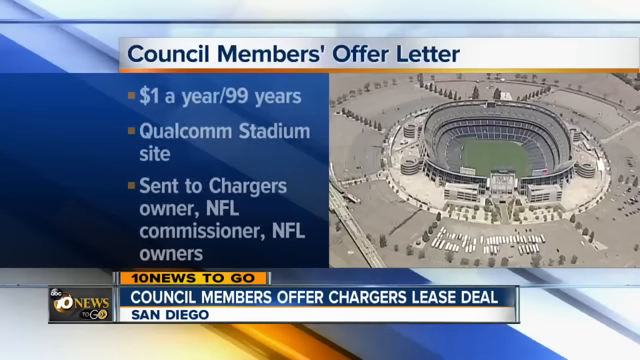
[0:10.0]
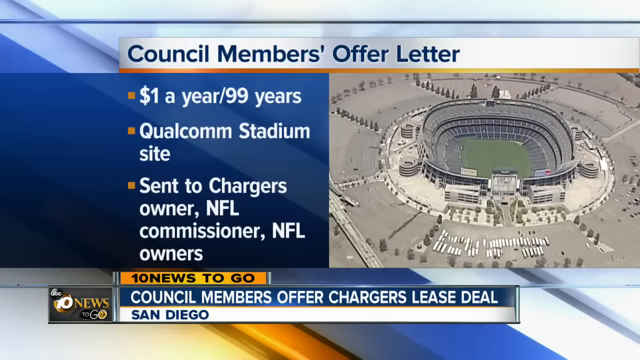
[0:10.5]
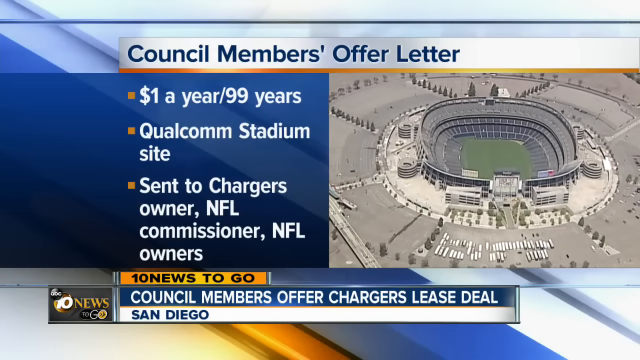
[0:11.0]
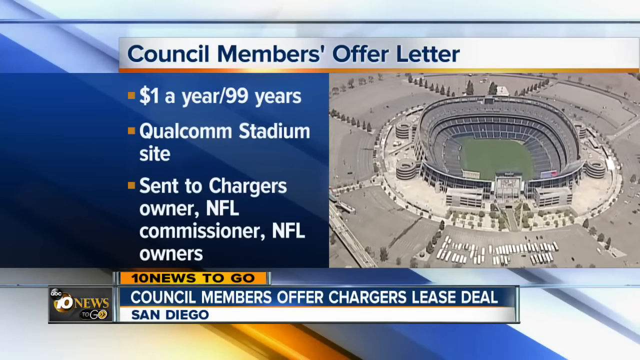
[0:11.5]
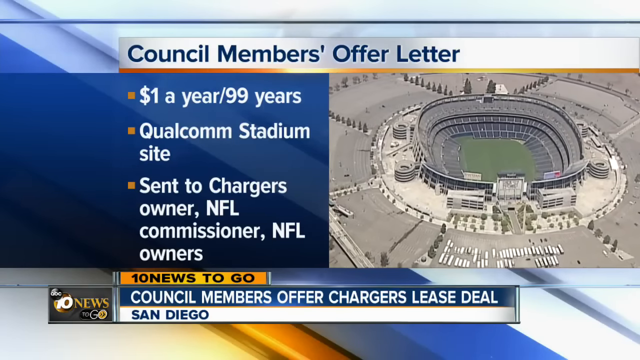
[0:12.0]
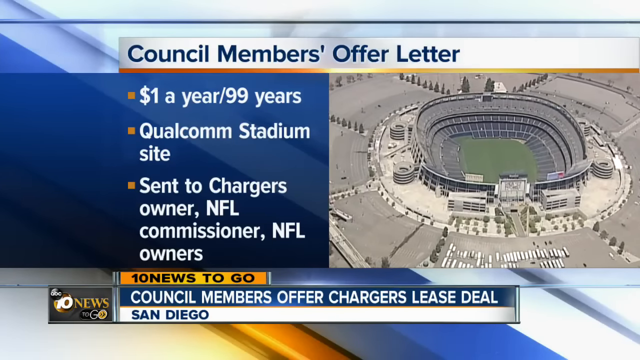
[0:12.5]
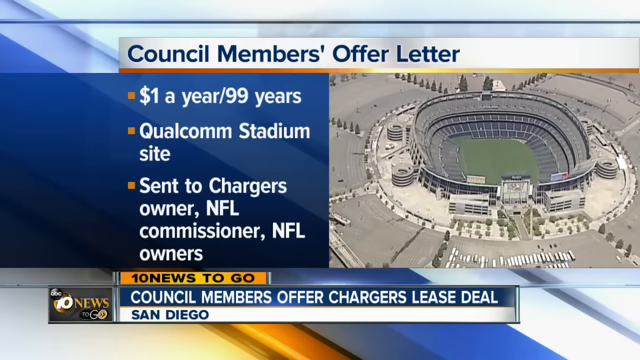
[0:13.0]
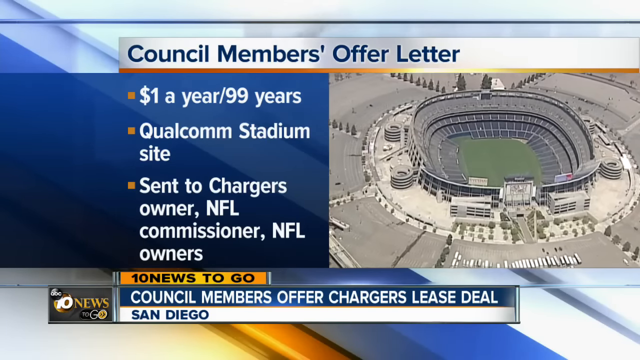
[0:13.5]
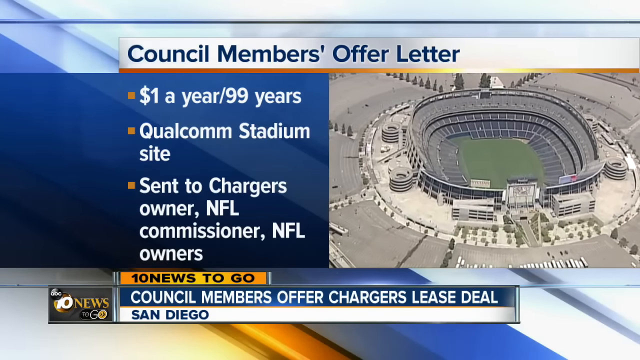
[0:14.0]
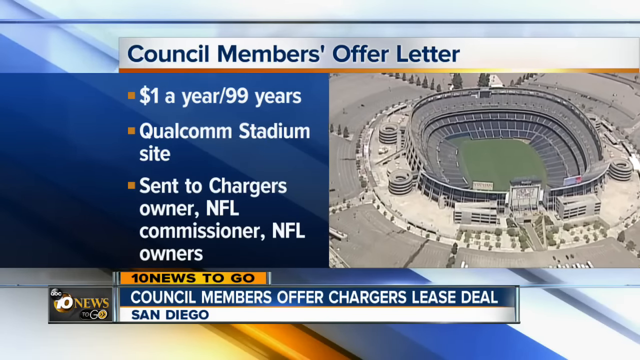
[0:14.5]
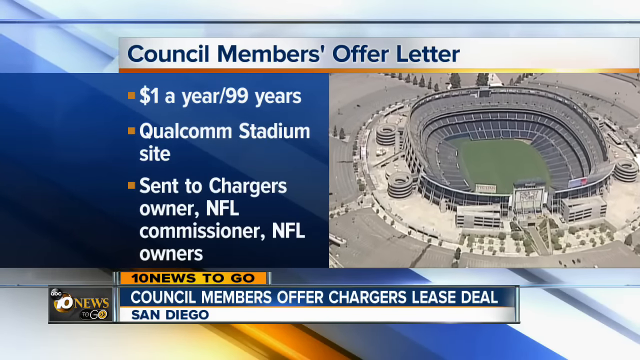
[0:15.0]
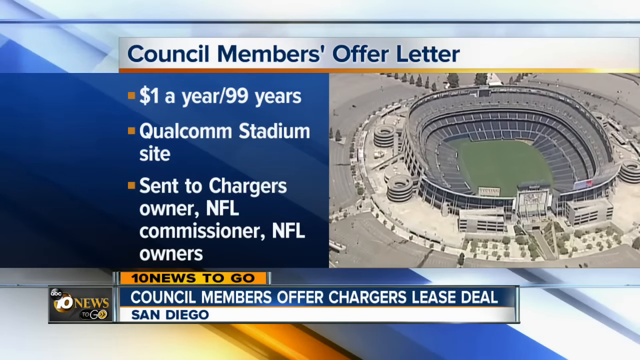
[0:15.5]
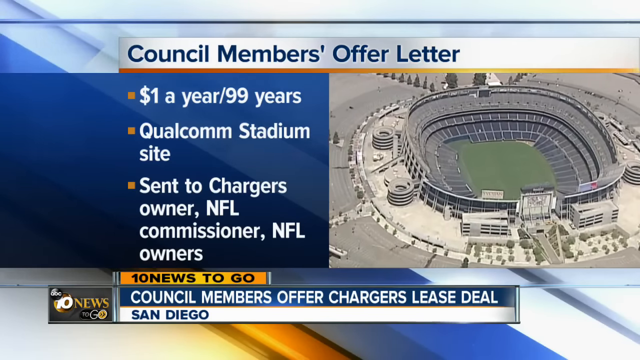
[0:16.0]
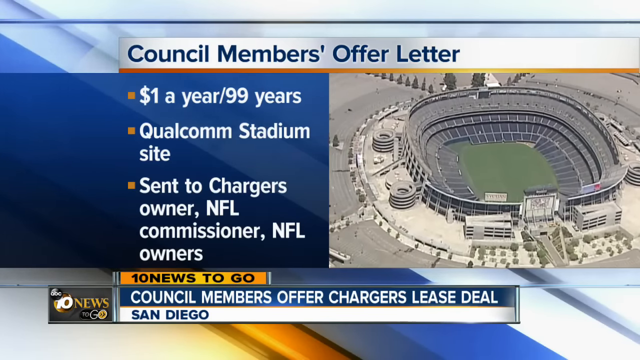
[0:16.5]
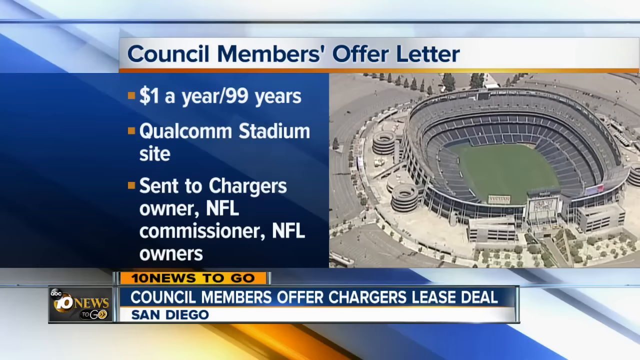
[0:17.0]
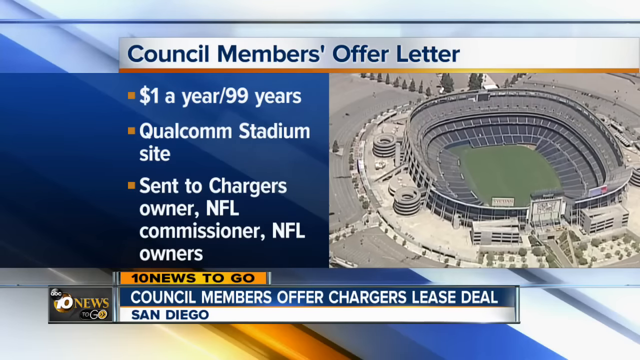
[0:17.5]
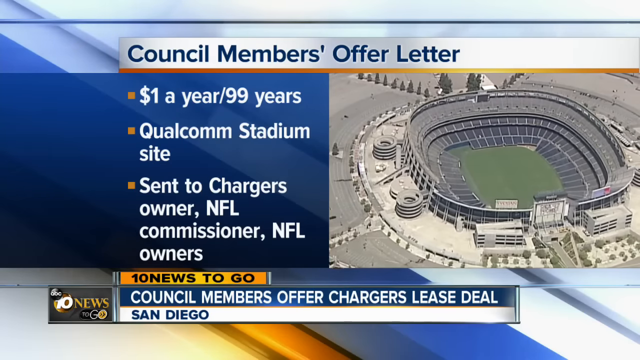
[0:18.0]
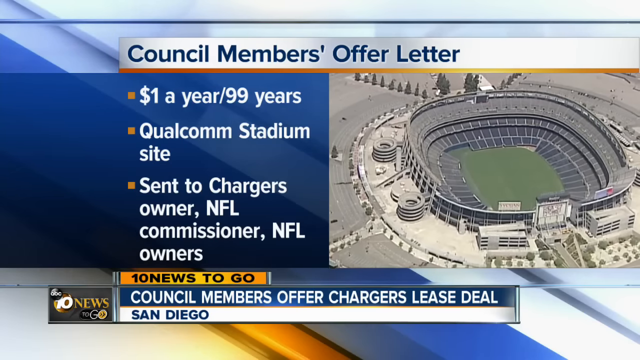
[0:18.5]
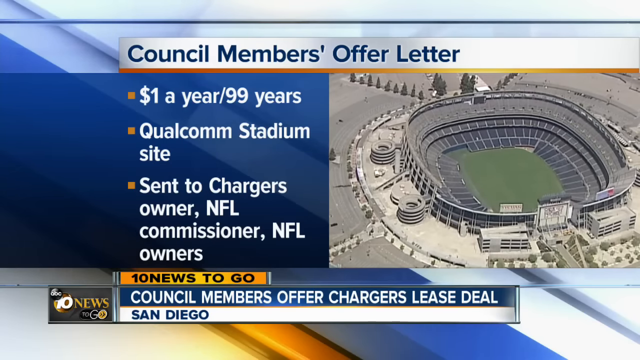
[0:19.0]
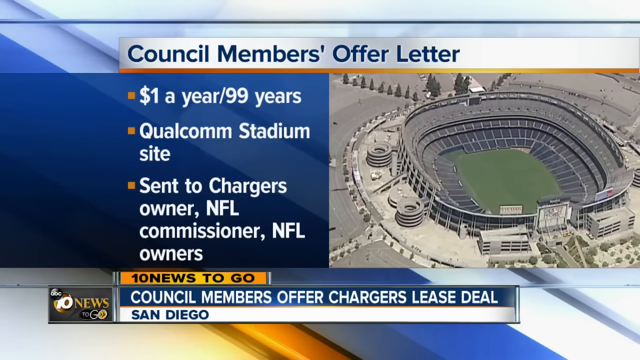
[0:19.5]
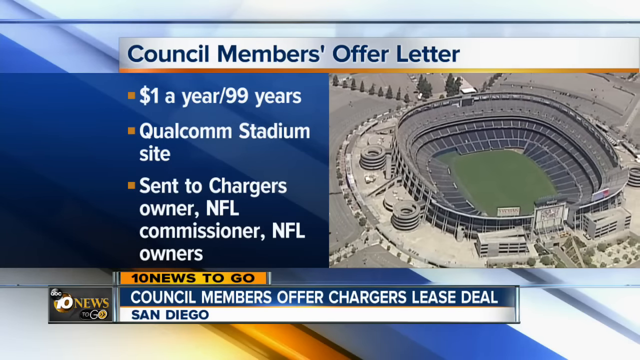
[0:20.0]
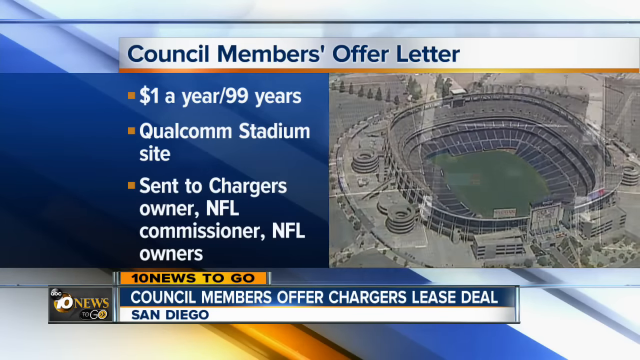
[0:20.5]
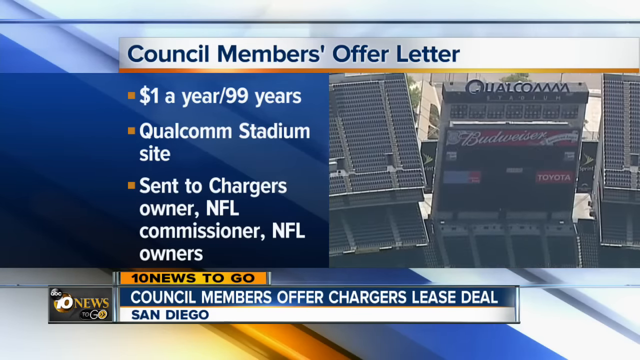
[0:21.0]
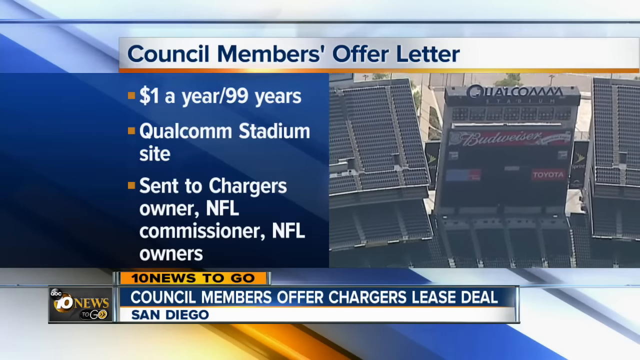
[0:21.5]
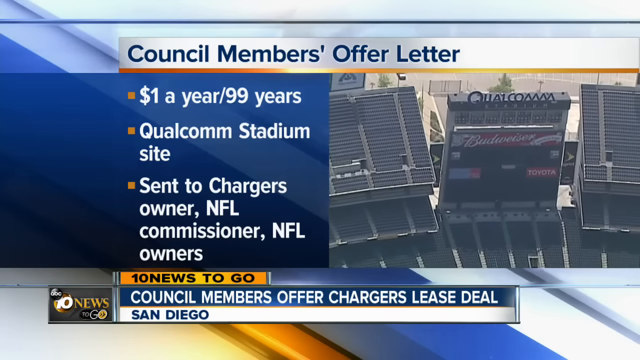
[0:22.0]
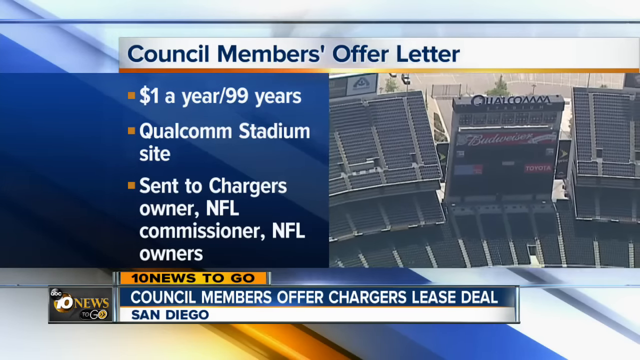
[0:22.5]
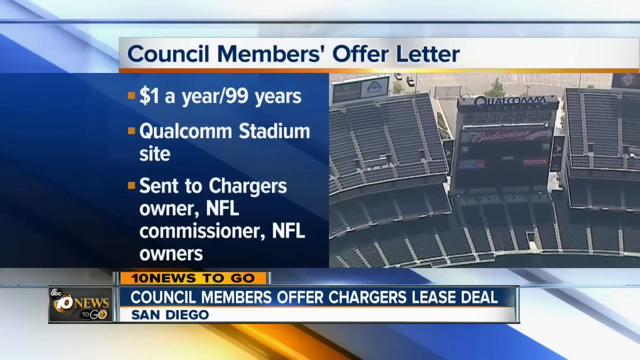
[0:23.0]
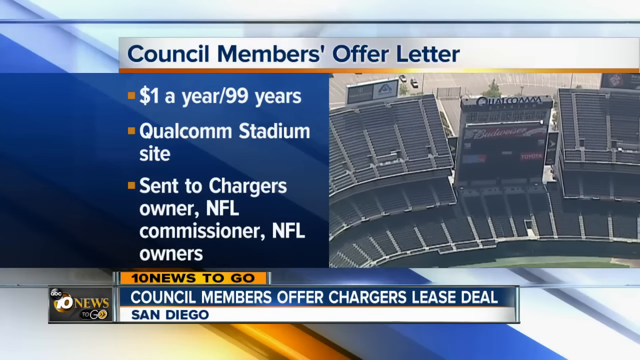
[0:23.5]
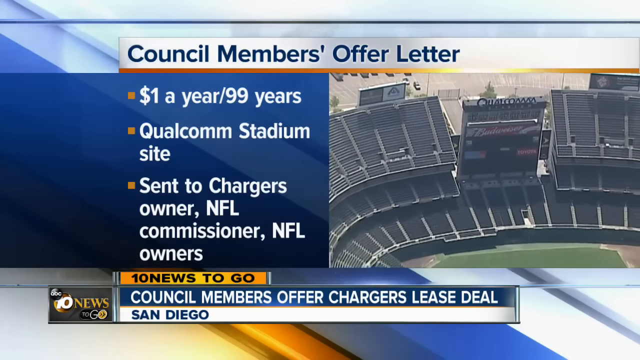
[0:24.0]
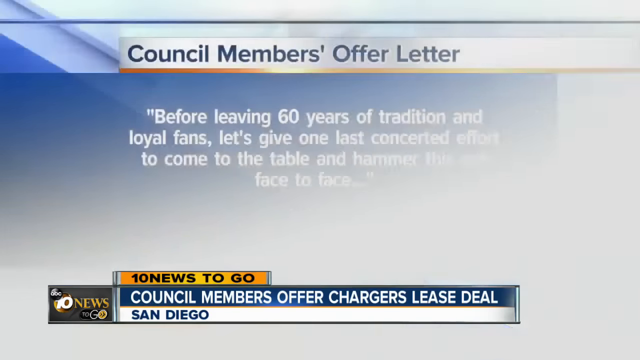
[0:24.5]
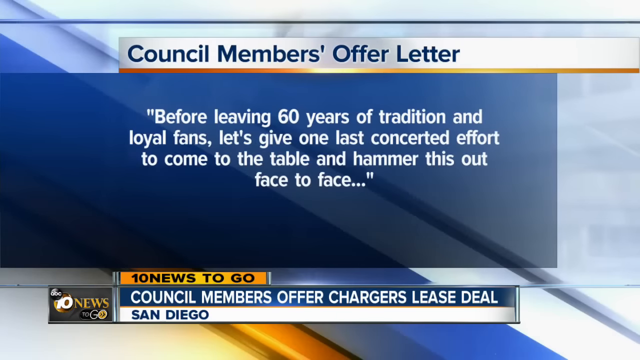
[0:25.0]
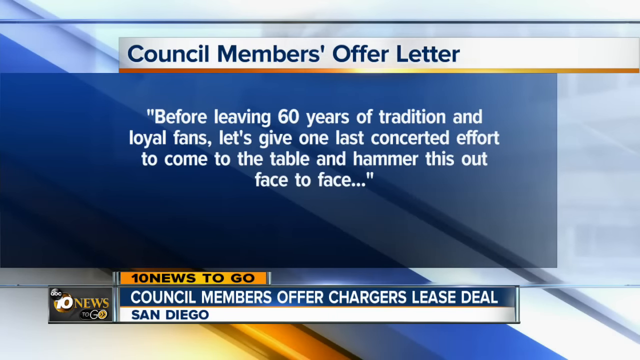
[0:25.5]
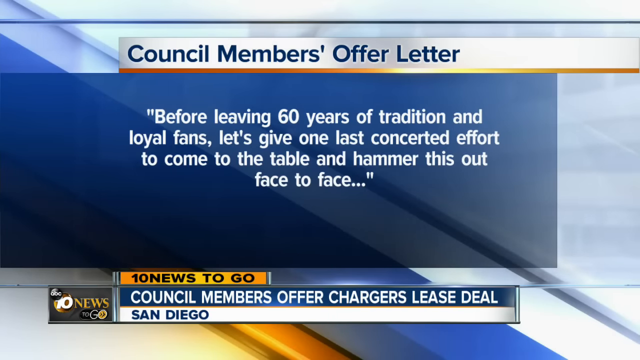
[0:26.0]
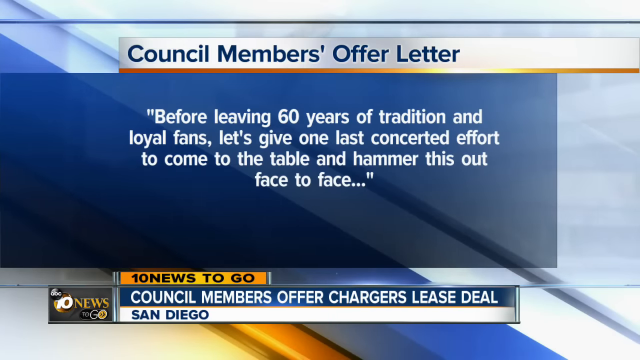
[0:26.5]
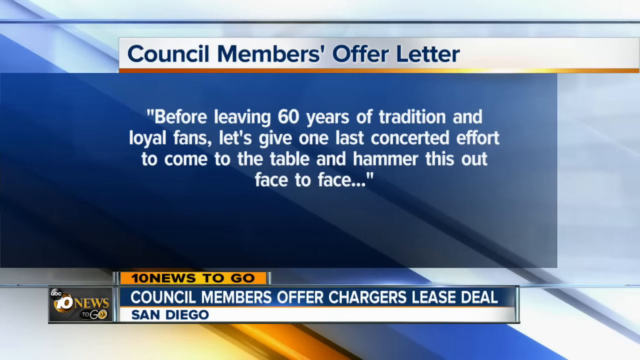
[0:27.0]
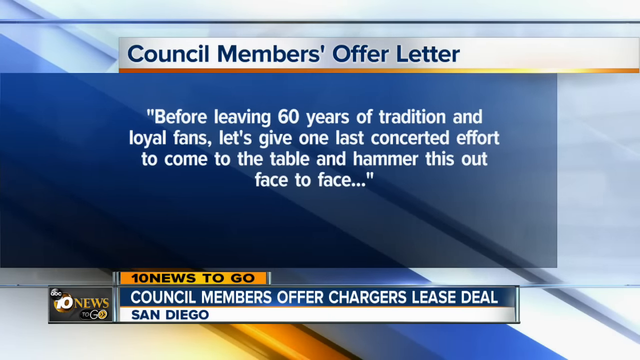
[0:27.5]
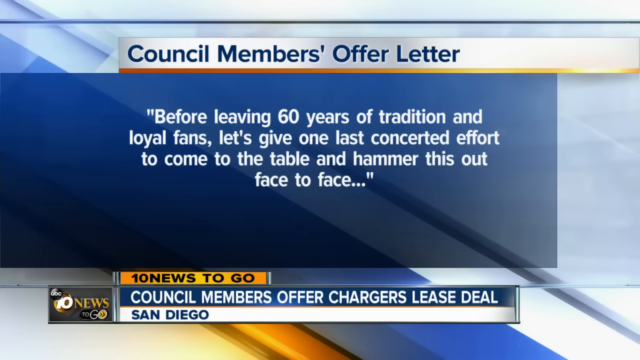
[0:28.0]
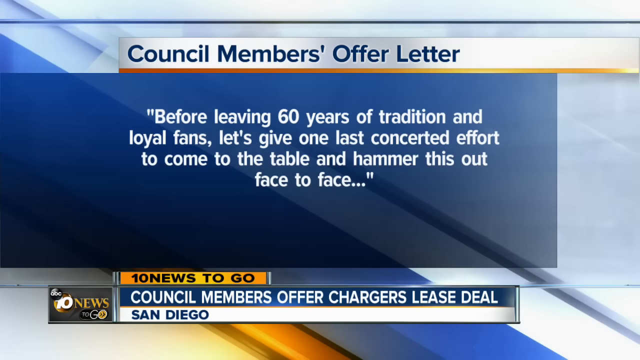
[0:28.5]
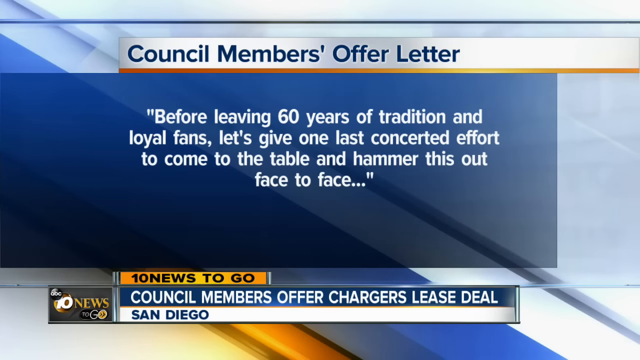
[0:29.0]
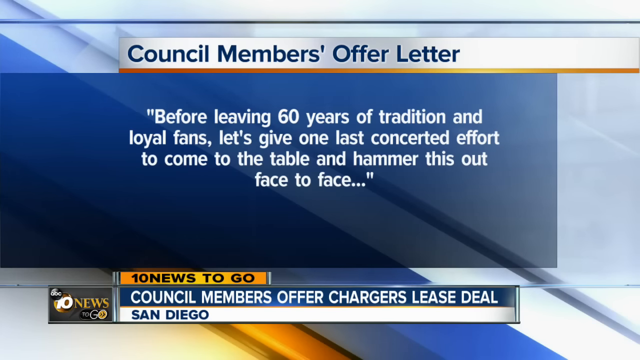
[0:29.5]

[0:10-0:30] The text reads "council members offer Chargers lease deal," and the council members' offer letter is shown: "$1 a year for 99 years," "Qualcomm Stadium site," "sent to Chargers owner, NFL commissioner, and NFL owners." The words are on the left, and on the right is a stadium, shown a little closer, kind of as though from a helicopter or drone flying around. The offer letter says "before leaving 60 years of tradition and loyal fans, let's give one last concerted effort to come to the table and hammer this out face to face."